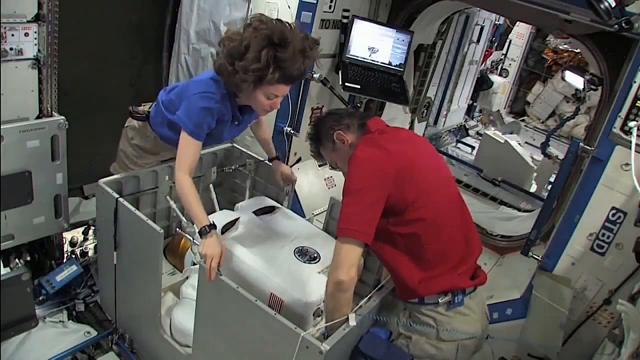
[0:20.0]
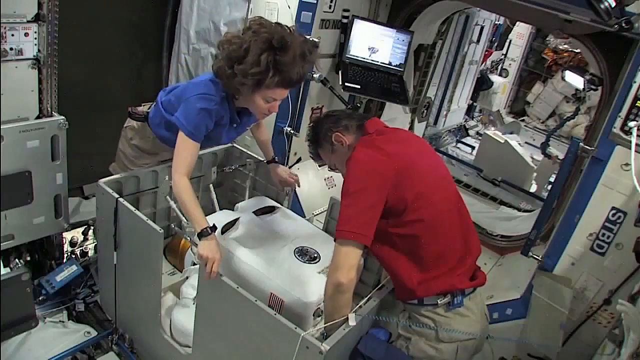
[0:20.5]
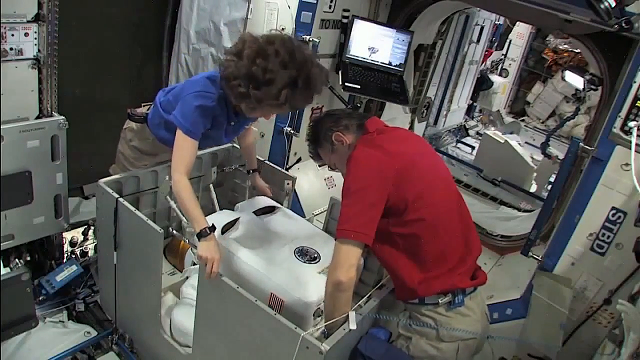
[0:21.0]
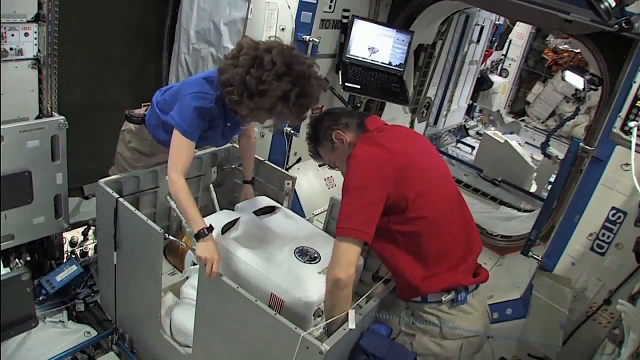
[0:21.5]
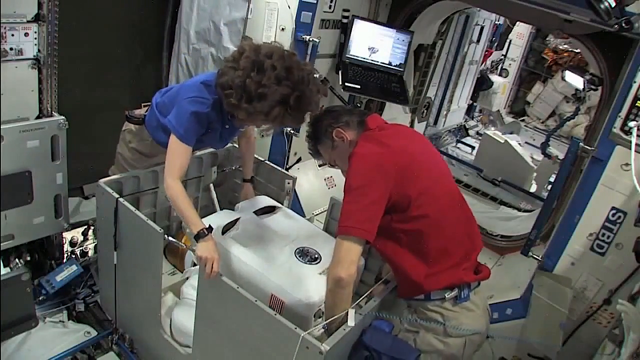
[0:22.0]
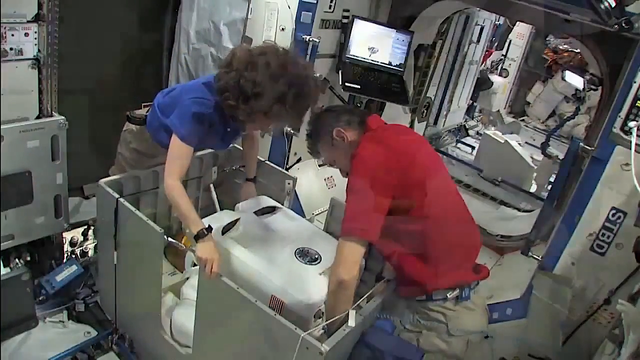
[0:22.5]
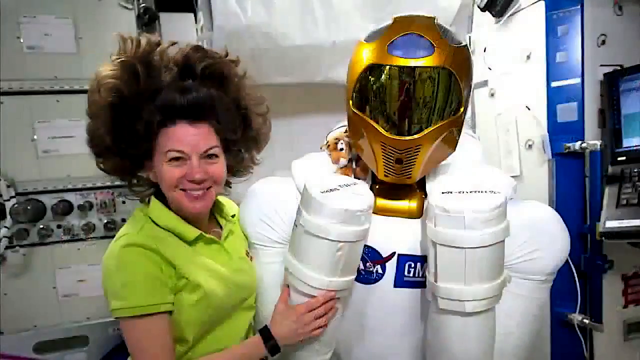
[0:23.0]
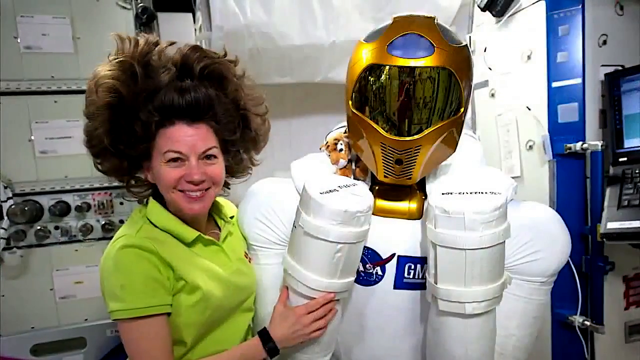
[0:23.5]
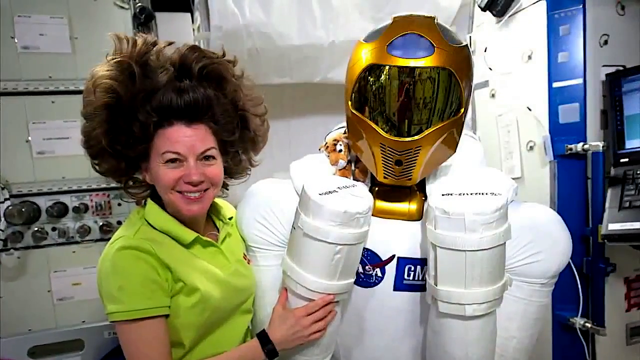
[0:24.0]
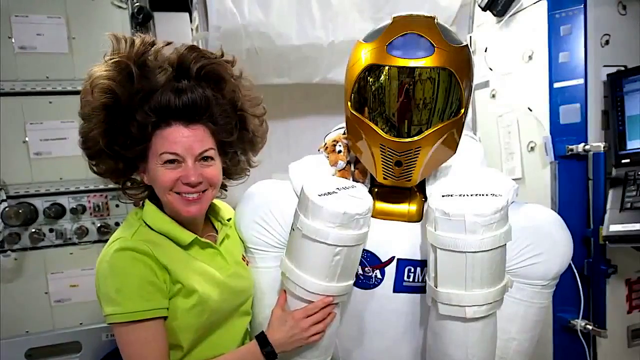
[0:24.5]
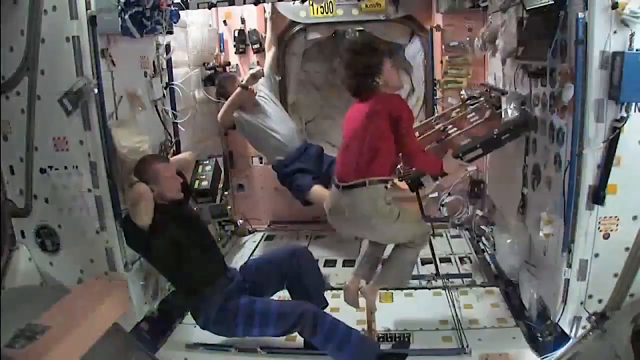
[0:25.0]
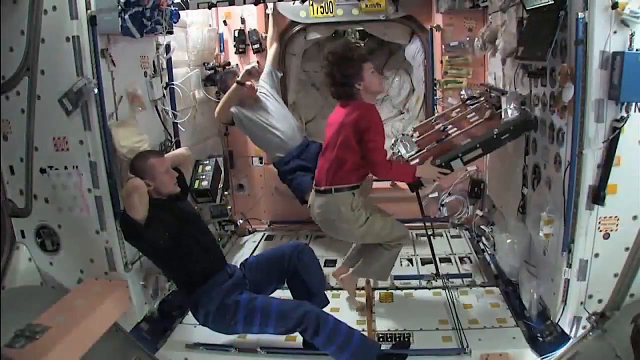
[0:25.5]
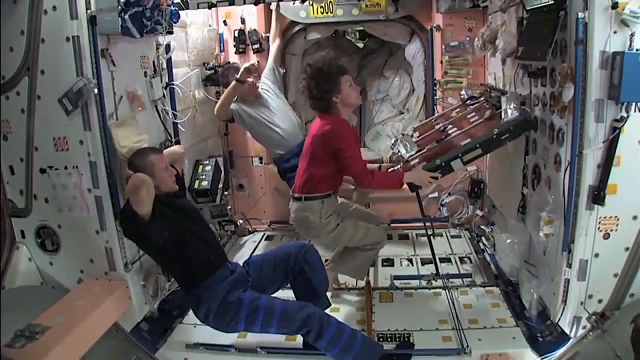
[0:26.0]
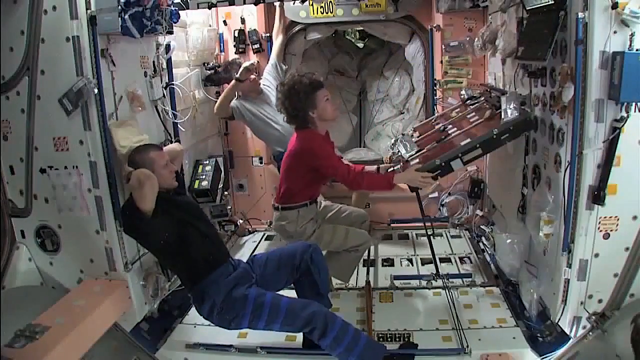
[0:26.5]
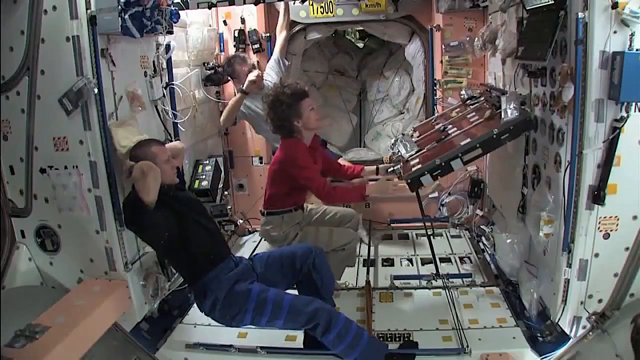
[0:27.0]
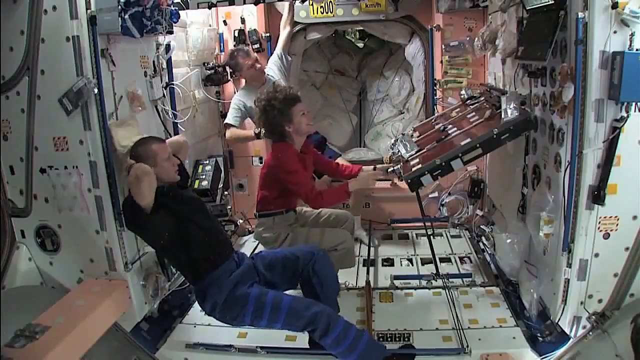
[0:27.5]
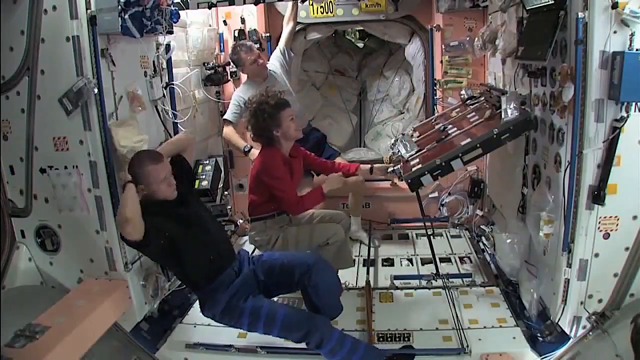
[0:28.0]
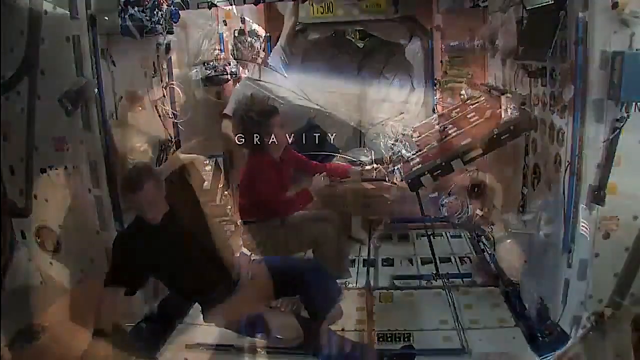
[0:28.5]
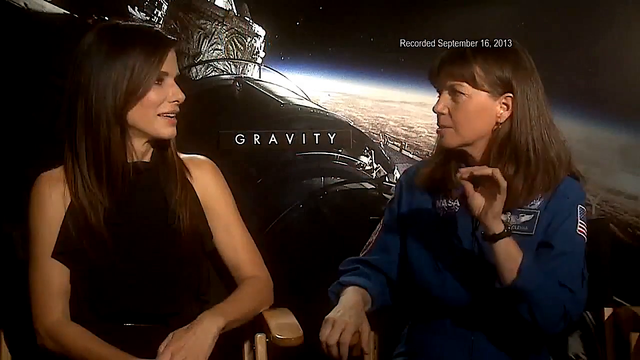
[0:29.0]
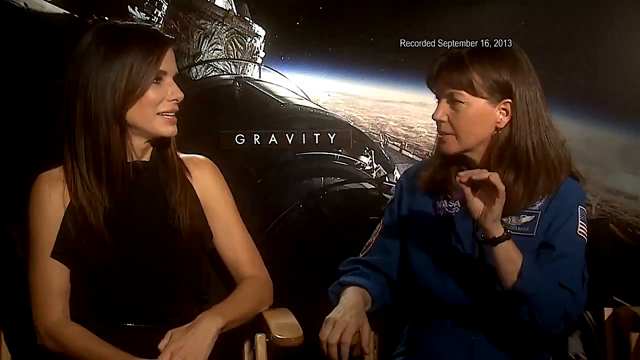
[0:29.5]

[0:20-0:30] Inside the space shuttle, a silver cargo item is in the center. A woman is up to the left of it, wearing khaki pants and a blue short-sleeve shirt, her black hair floating above her in the absence of gravity. Her arms are out in front of her, touching the lower right of the silver cargo. A man in a red shirt is bent over, facing down. She reaches down on the right side of the cargo while he keeps looking down, and she leans her hair forward so her face is not visible. Next comes a still shot of a woman in a dark green polo shirt, her hair going up above her head, looking at the camera and smiling. To her right is a white astronaut suit with a gold helmet and what looks like a reflective black visor, and the shot slowly zooms in on it. The video cuts to three people floating. A woman in red is in the center facing right and looking up. Down to her left a man kind of leans back, hands behind his head, legs out in front of him. Up between them in the distance another man reaches up with his left arm, his other arm kind of in his face as he floats. The woman moves in front of the panel, kind of moves between them, and moves back a little. The video then cuts back to the astronaut on the right side, looking left and talking to Sandra Bullock.